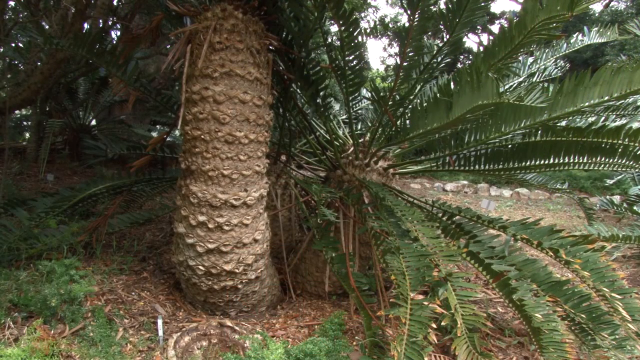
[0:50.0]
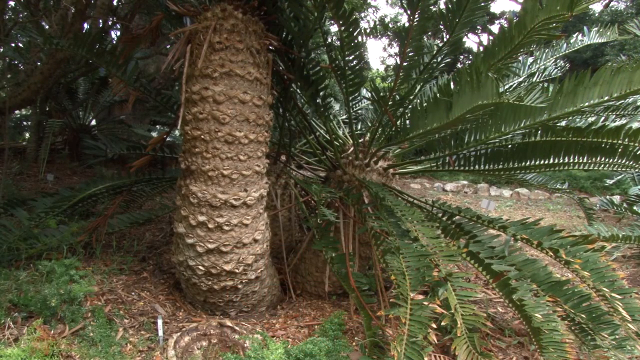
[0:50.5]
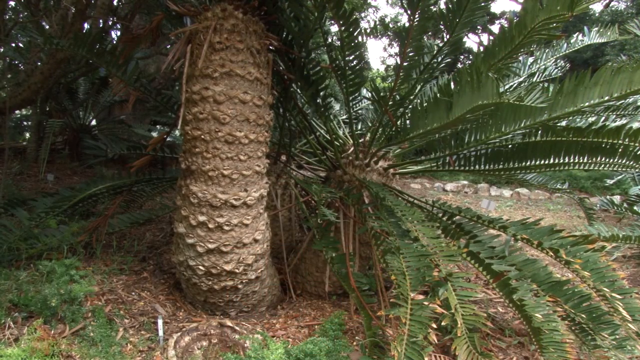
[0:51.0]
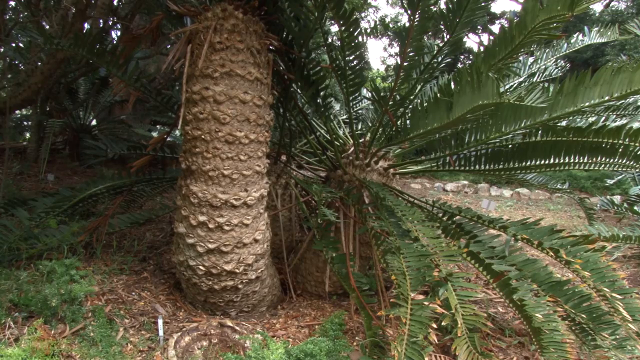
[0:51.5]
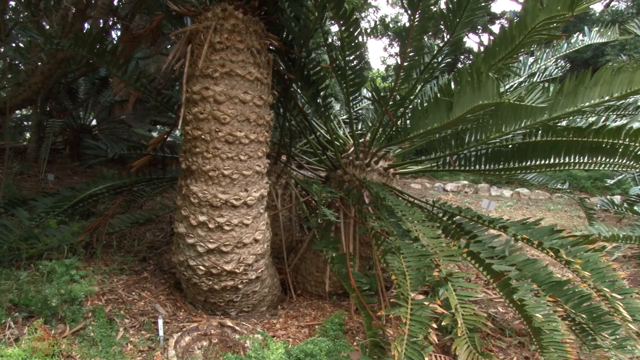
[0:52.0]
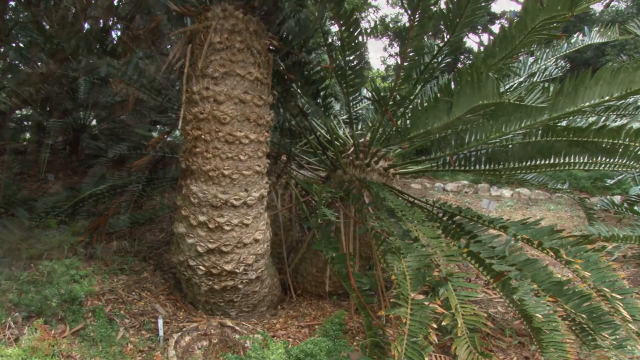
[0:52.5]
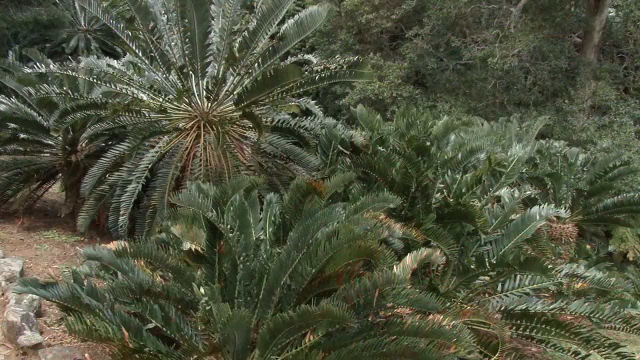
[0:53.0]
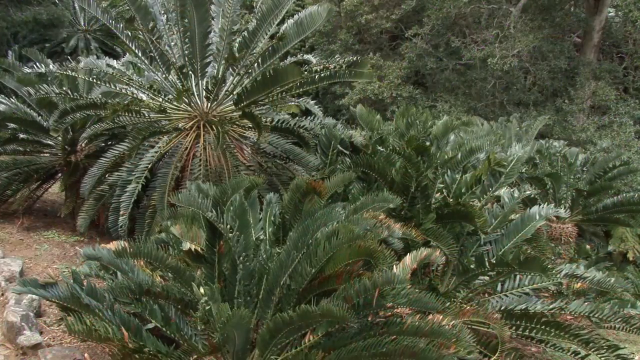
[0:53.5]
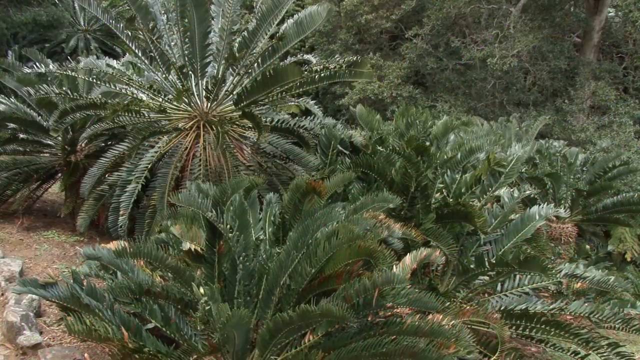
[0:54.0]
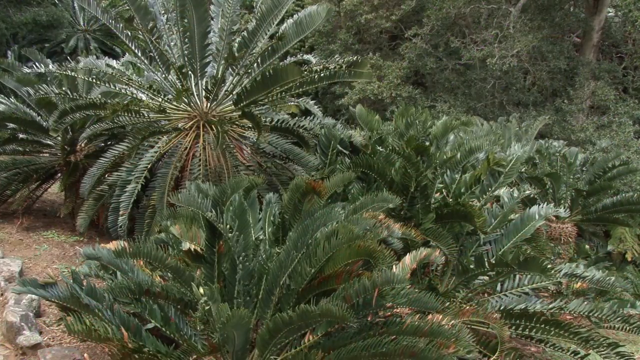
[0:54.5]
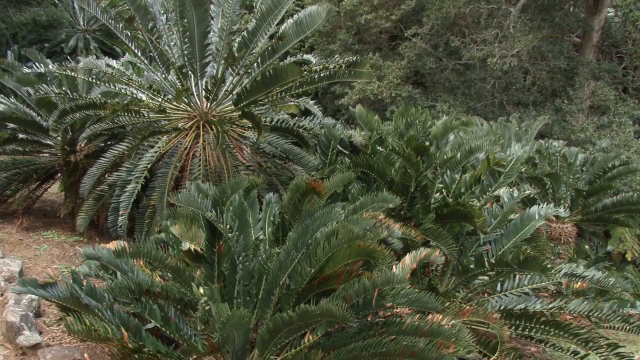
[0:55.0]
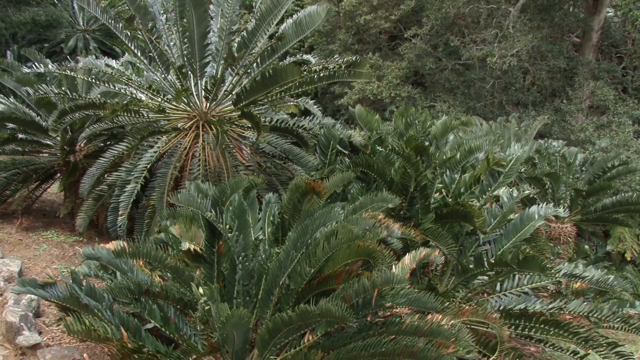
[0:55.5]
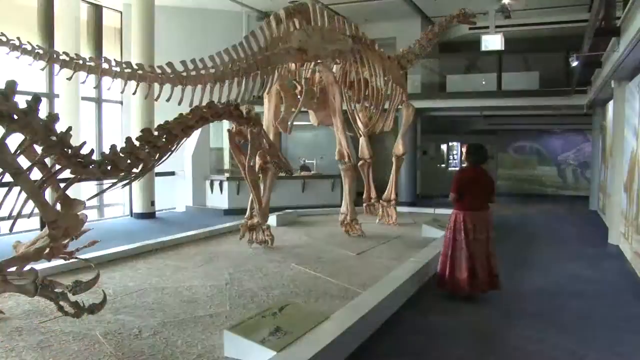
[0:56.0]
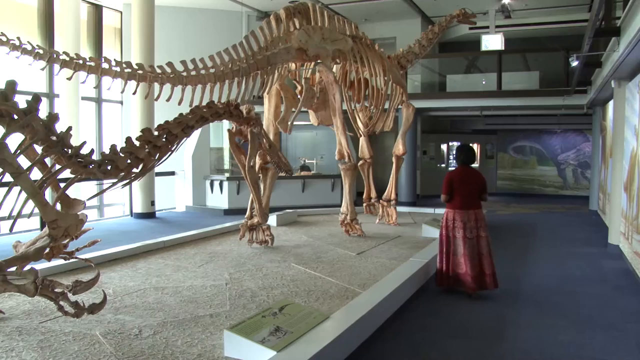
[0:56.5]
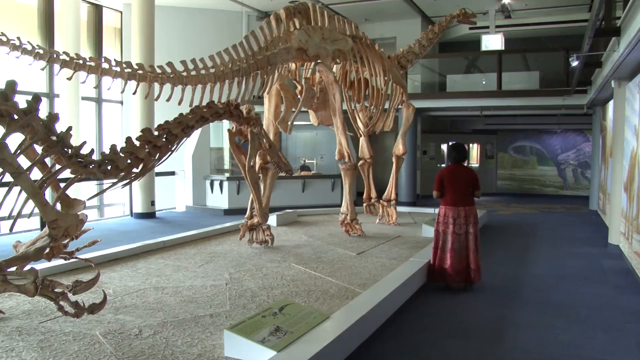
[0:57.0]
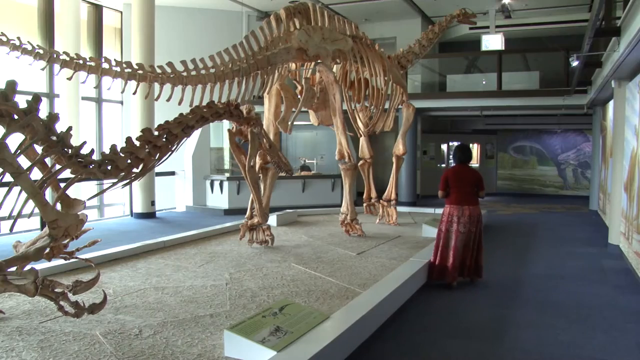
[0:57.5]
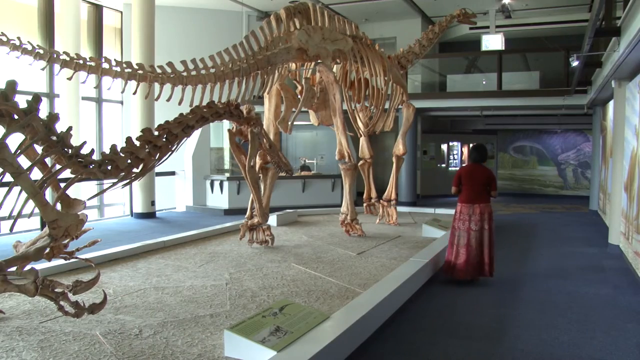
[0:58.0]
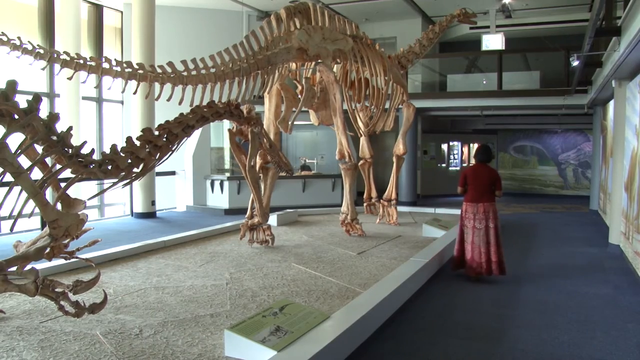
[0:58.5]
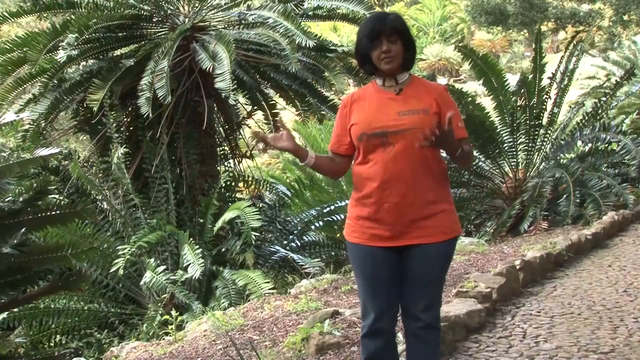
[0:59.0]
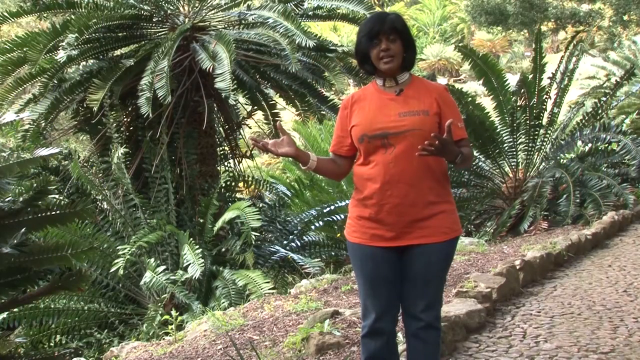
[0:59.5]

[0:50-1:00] What seems to be the trunk of a palm tree is shown with a smaller palm to its right. The next slide shows another set of palms with deep green, long, thick fronds, with some other trees of different sorts in the background. An interior shot then shows what must be the inside of a sort of museum, with kind of a dinosaur skeleton visible. A woman in a dark red top and a lighter red skirt has her back to the camera and seems to be looking at it. The doctor is then seen briefly again, wearing her light orange or rose-colored shirt.